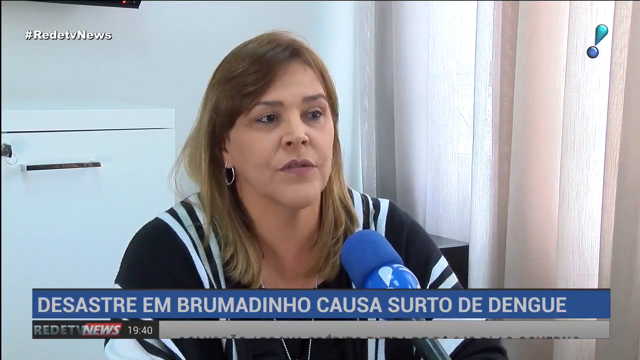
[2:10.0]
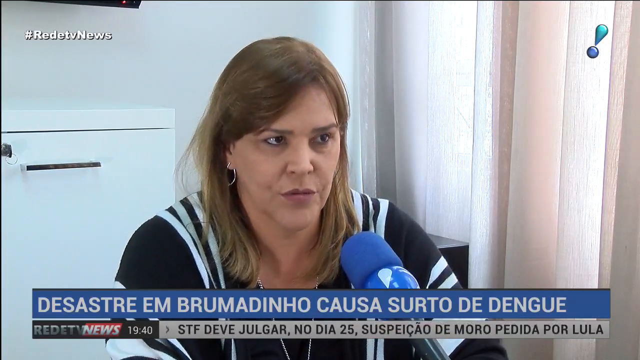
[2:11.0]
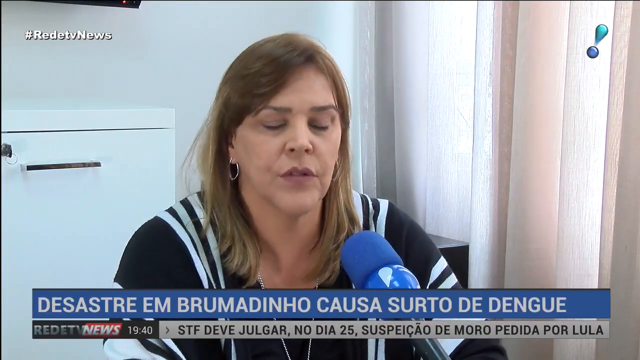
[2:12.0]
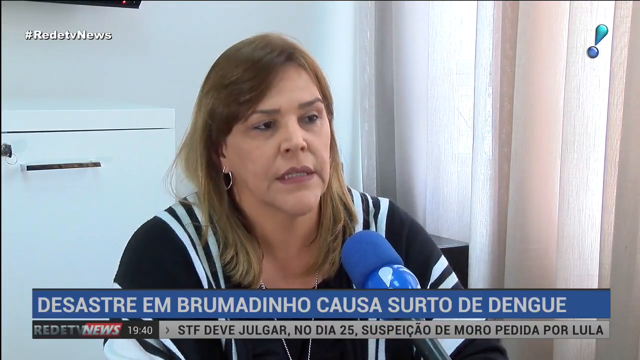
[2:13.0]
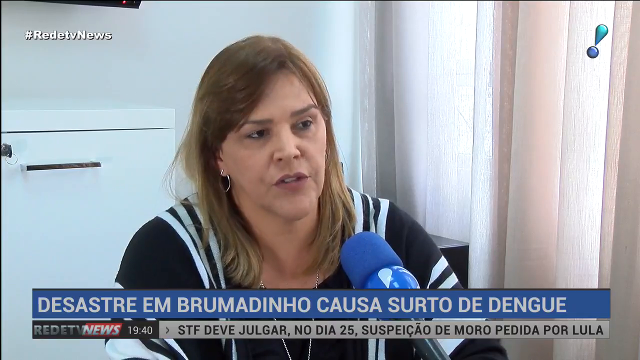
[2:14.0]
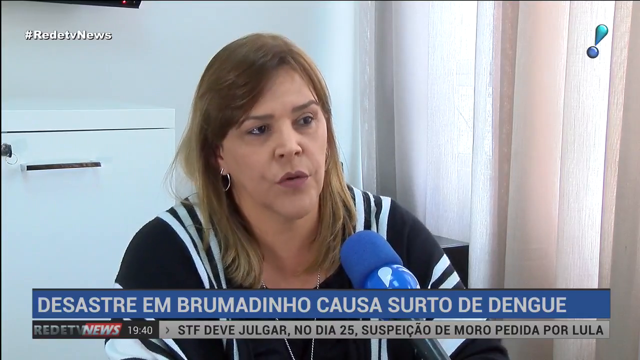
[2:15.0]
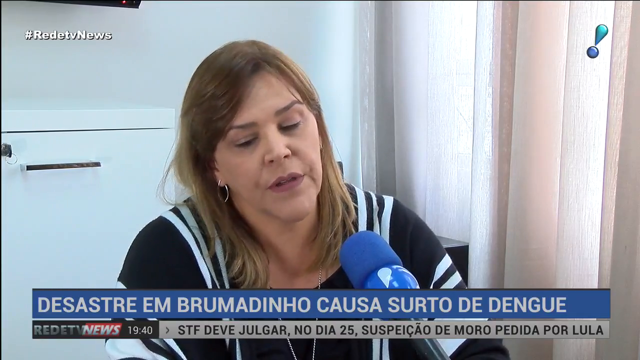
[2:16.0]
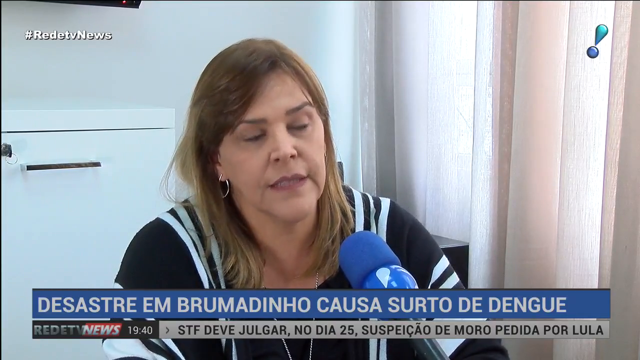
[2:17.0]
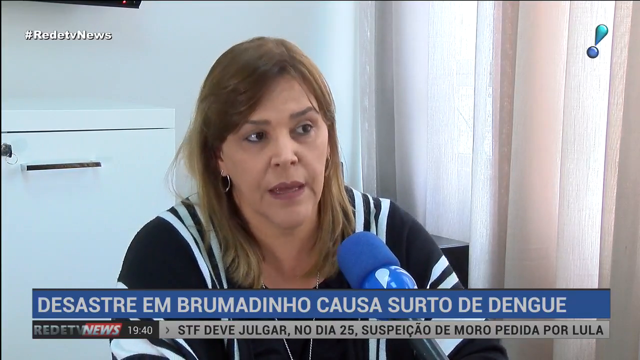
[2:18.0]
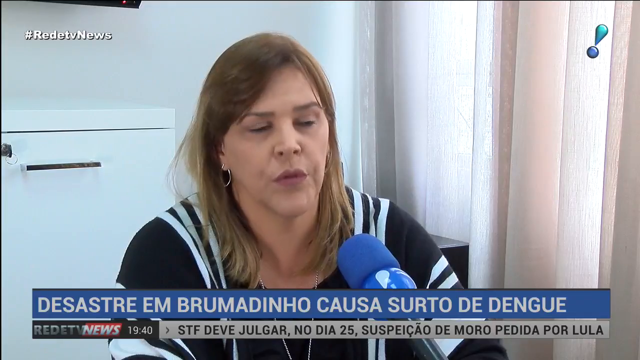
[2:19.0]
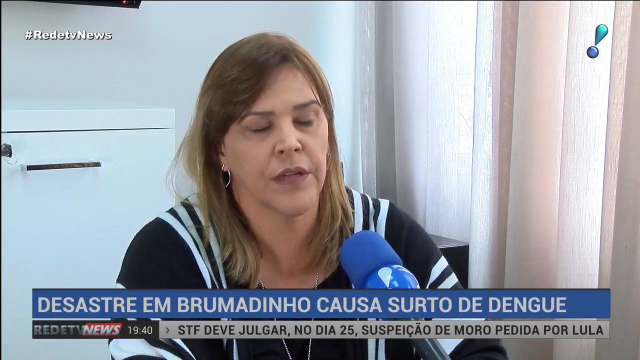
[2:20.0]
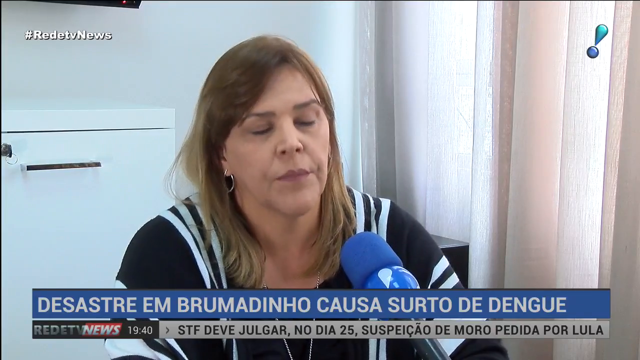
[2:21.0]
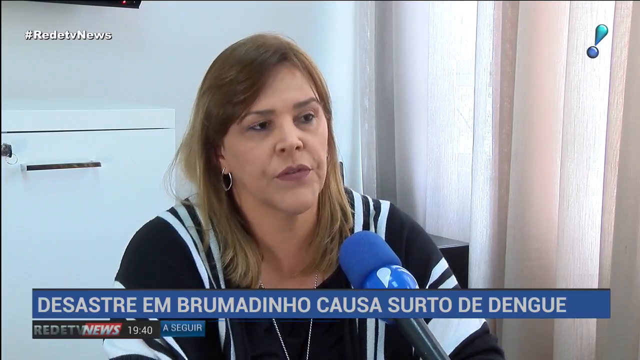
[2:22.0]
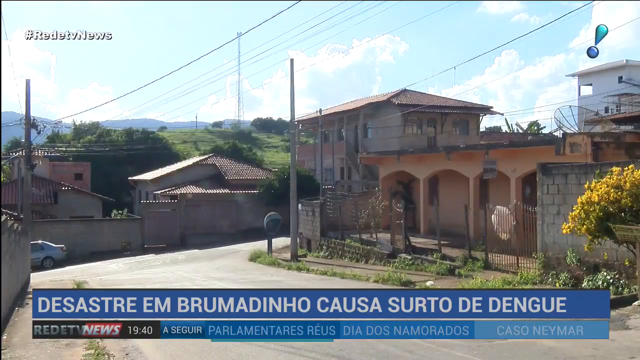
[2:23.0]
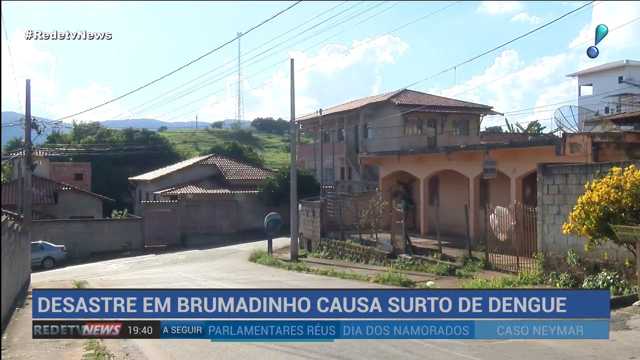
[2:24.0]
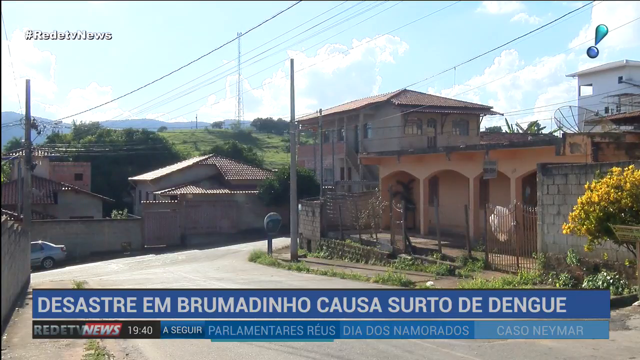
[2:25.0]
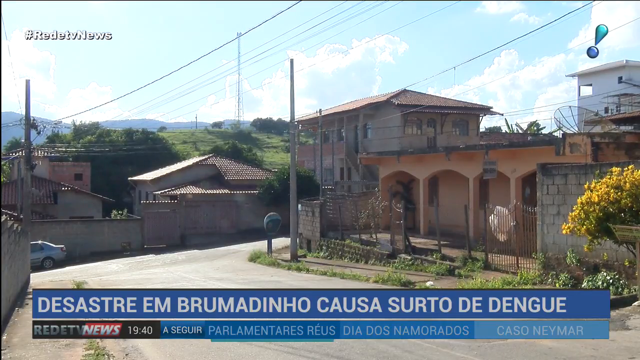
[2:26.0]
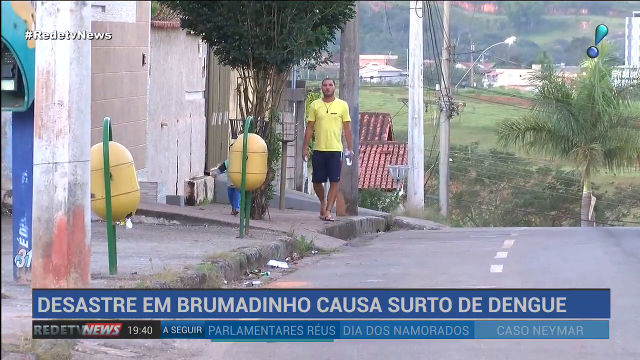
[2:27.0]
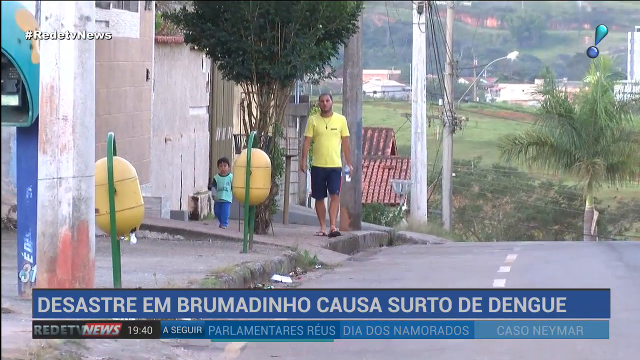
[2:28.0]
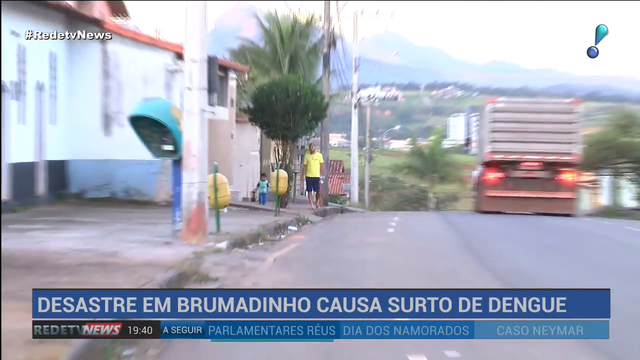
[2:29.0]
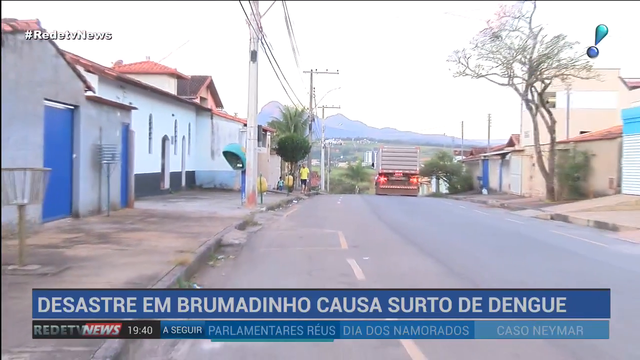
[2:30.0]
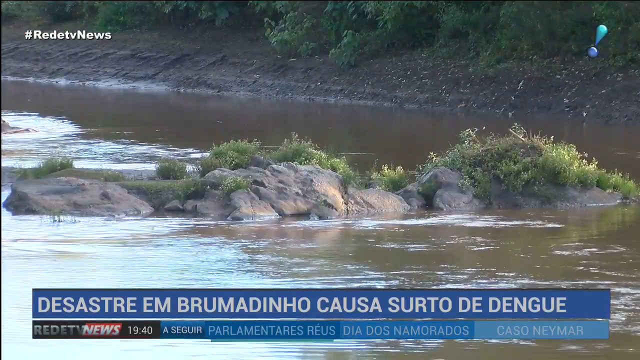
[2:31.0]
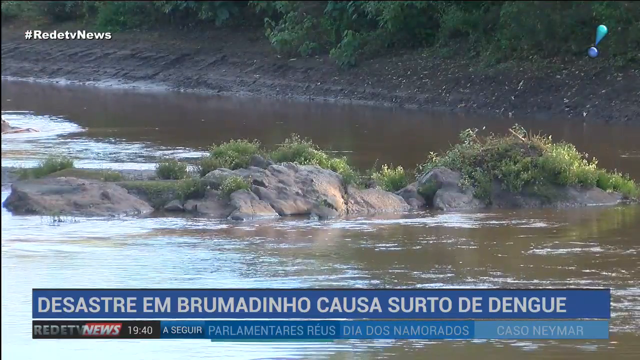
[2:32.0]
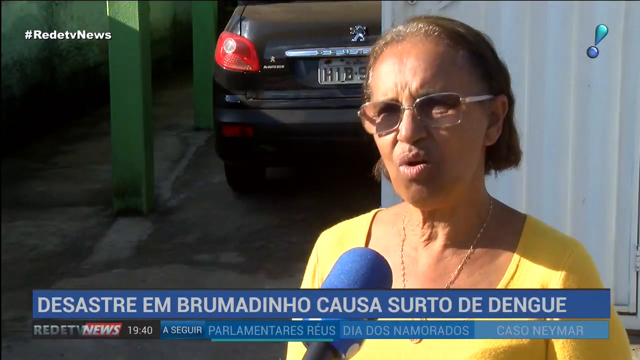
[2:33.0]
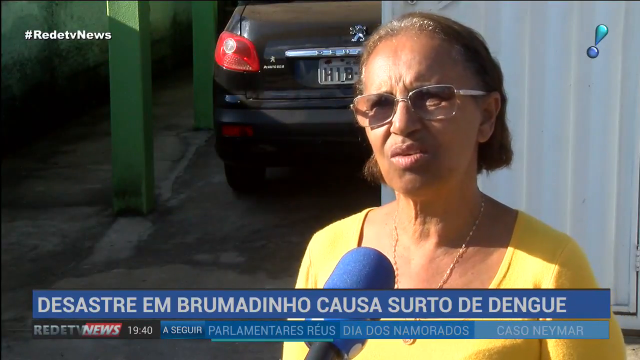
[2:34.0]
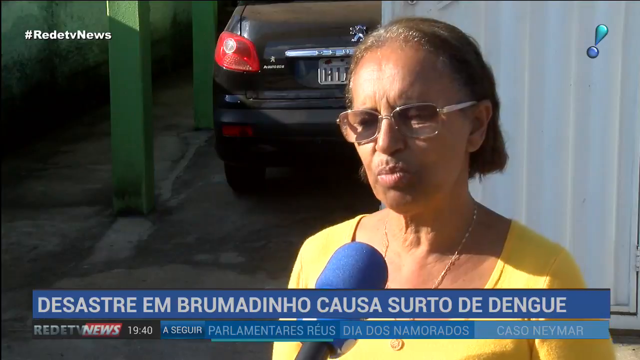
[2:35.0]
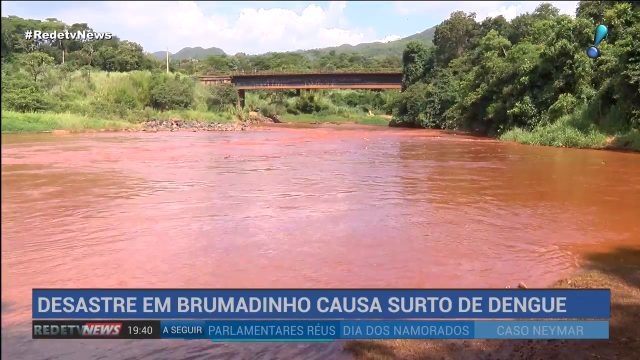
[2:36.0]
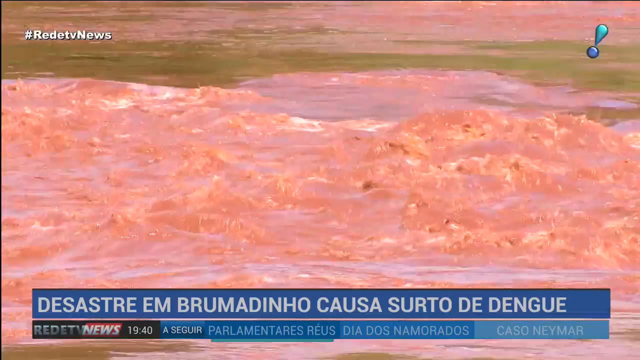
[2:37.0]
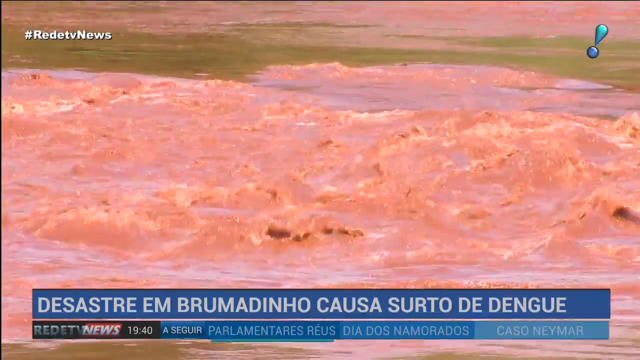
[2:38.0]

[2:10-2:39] The infectologist is shown in her office, with some curtains visible, talking to the news team; text in a different language is at the bottom of the screen. Buildings and a street are then shown, with what looks like a father and son walking up the street. The lake is shown again, and another woman, an older African American woman, is interviewed. The lake is really brown. The scene appears to show flooding, with mud, garbage and fish washed ashore.